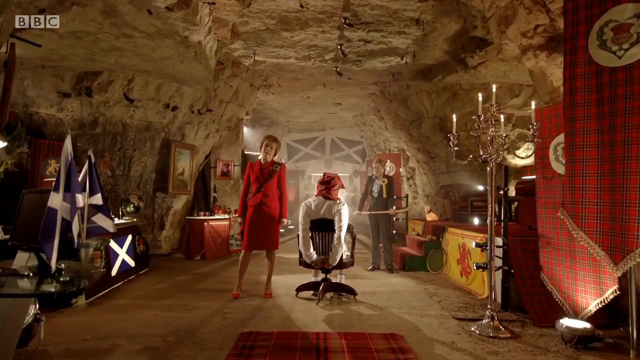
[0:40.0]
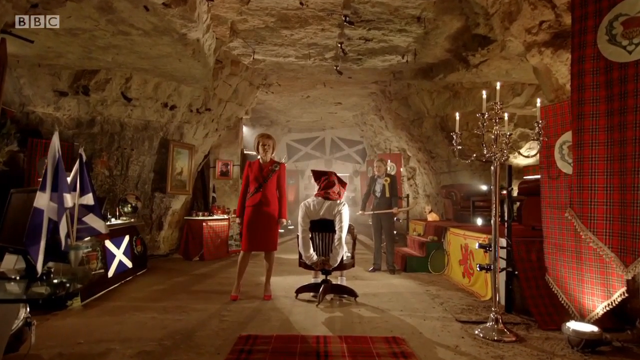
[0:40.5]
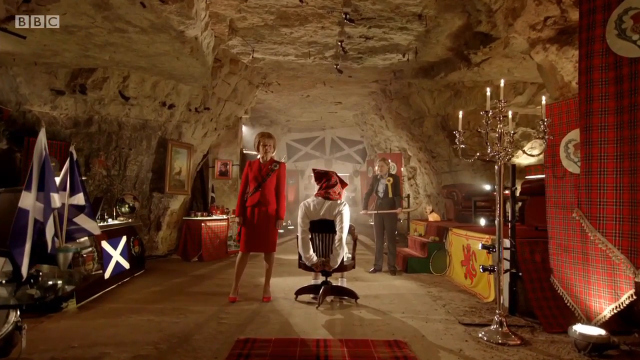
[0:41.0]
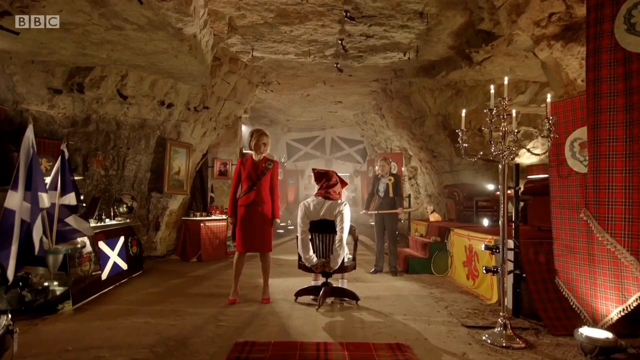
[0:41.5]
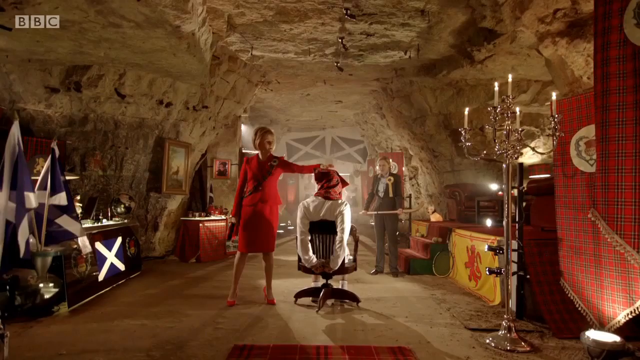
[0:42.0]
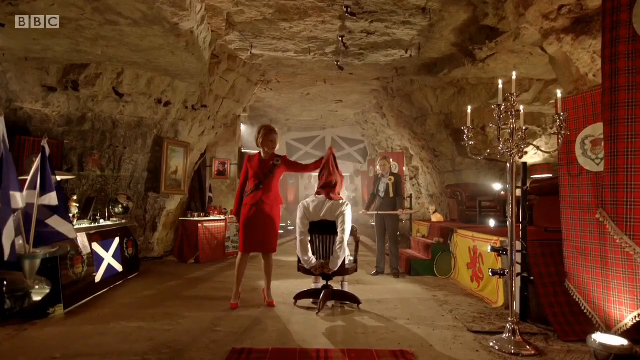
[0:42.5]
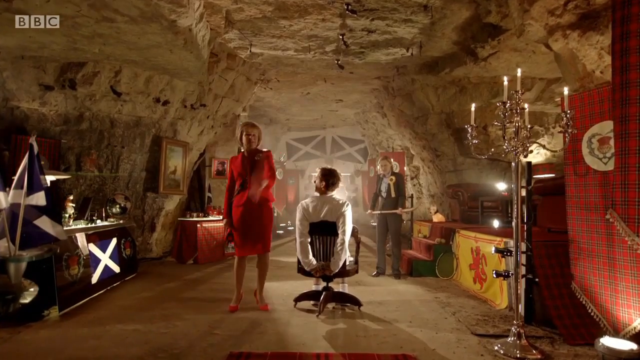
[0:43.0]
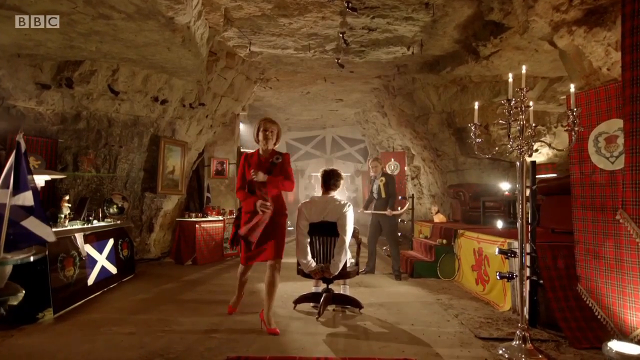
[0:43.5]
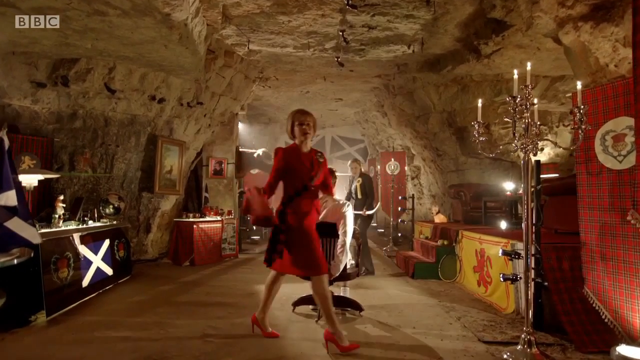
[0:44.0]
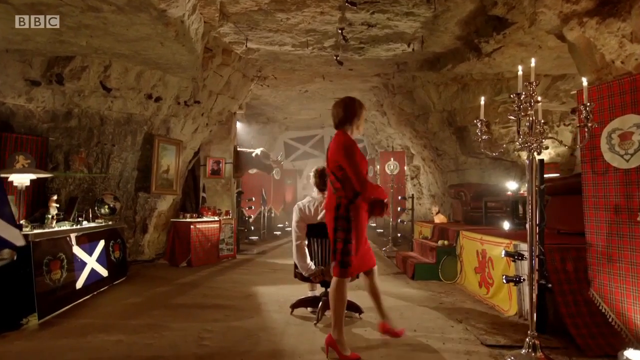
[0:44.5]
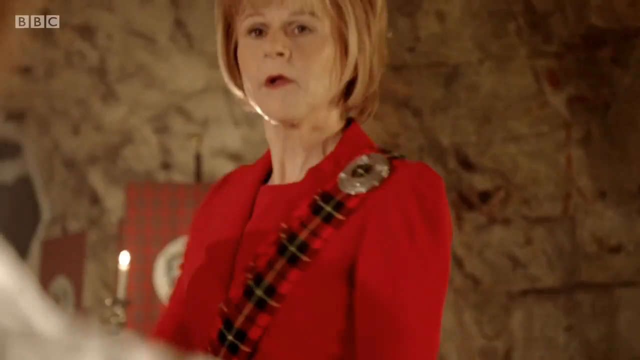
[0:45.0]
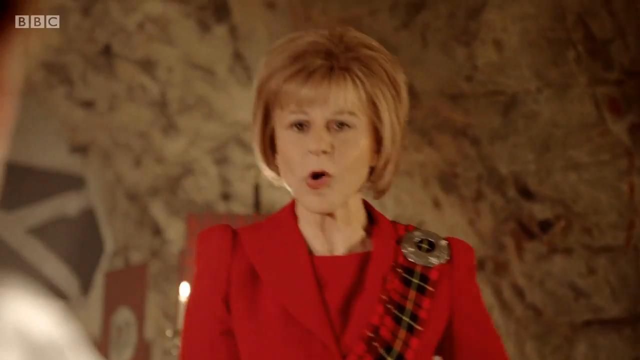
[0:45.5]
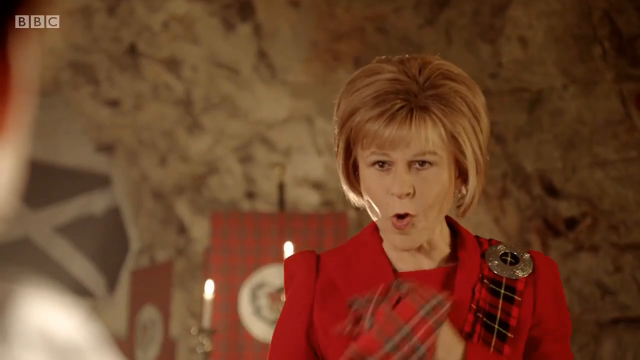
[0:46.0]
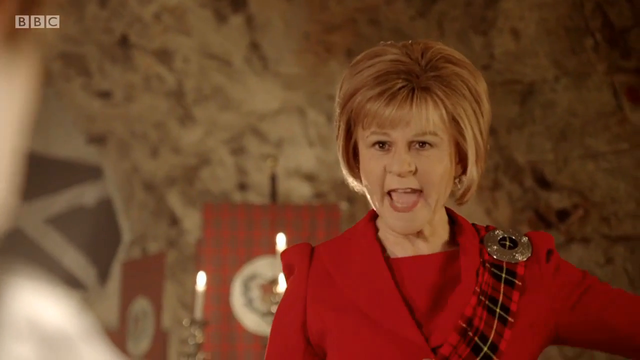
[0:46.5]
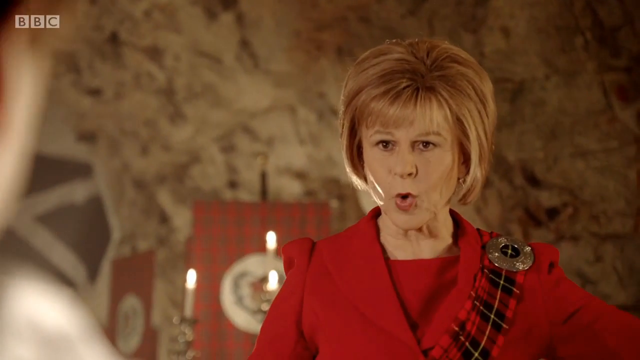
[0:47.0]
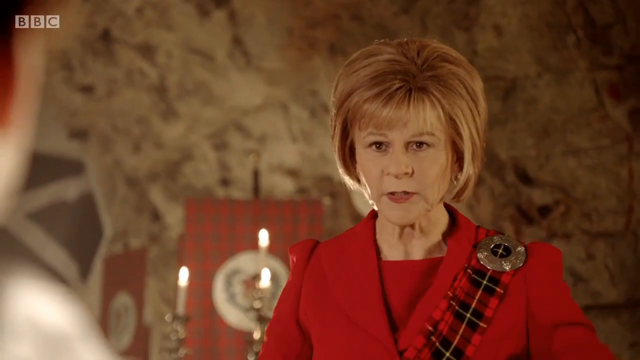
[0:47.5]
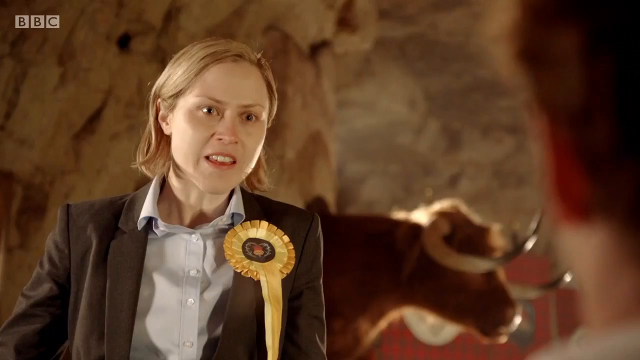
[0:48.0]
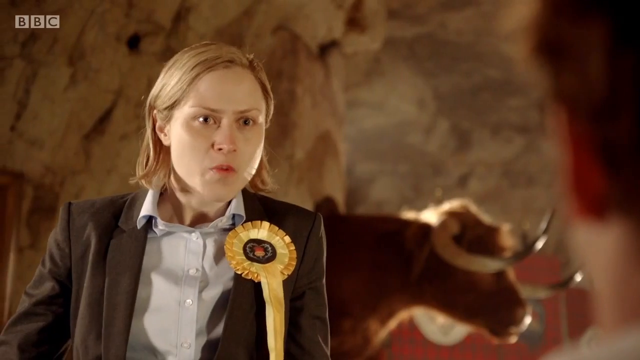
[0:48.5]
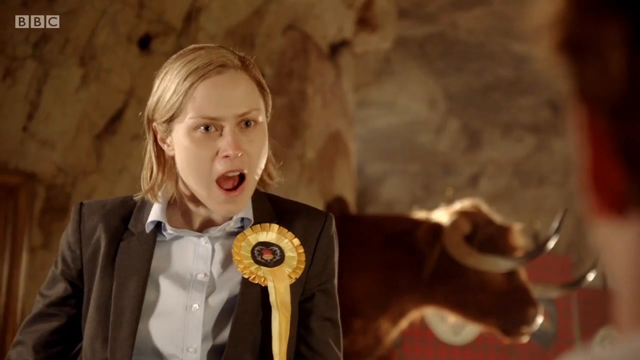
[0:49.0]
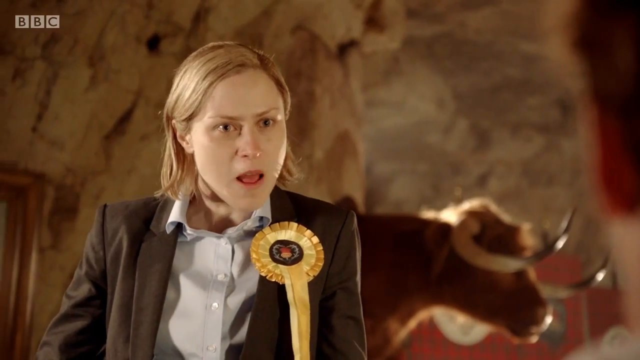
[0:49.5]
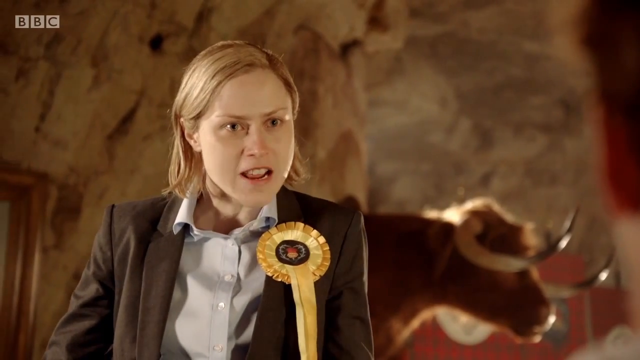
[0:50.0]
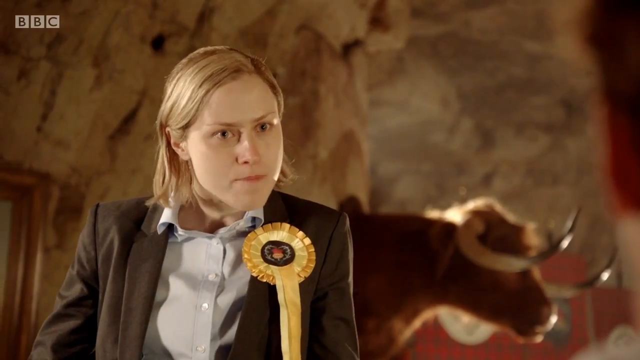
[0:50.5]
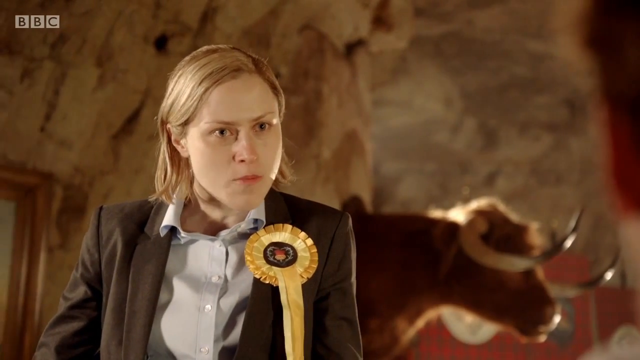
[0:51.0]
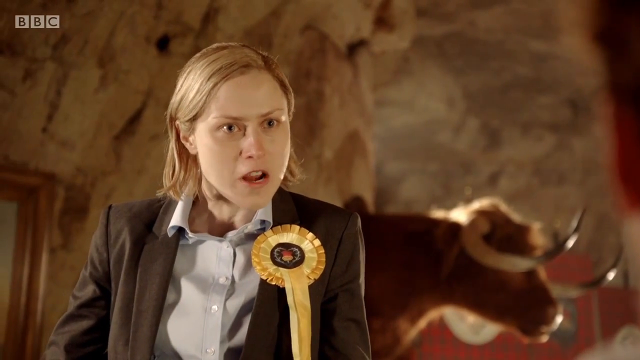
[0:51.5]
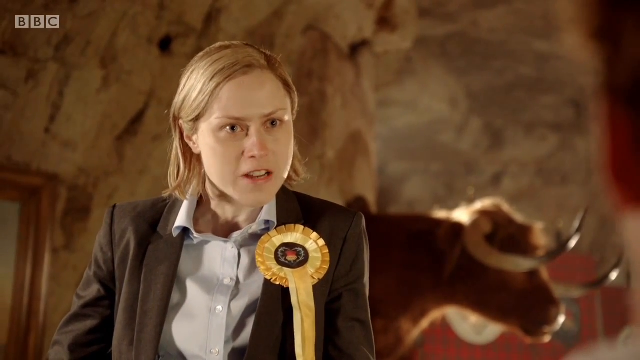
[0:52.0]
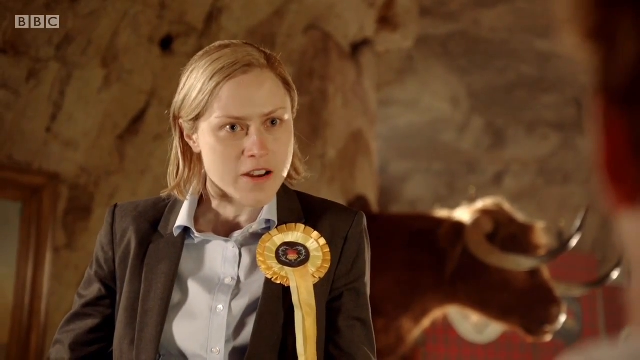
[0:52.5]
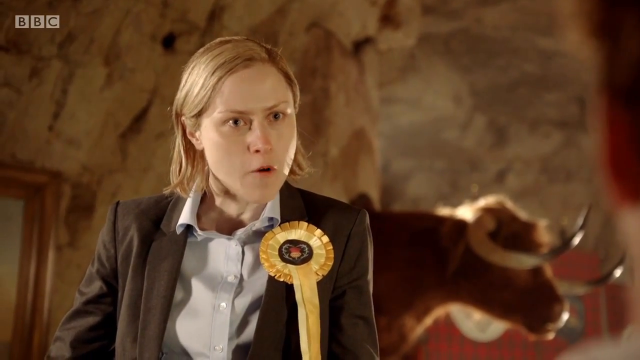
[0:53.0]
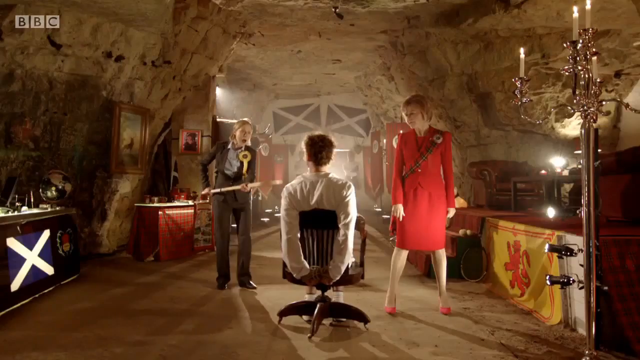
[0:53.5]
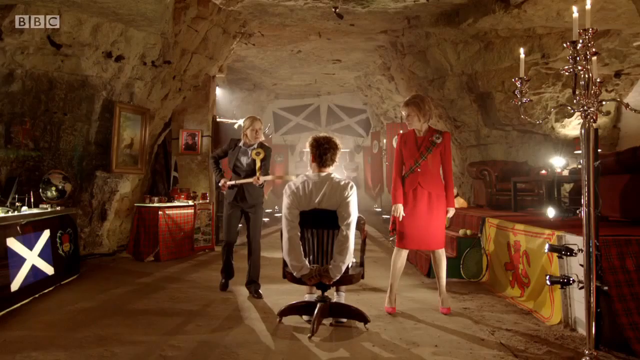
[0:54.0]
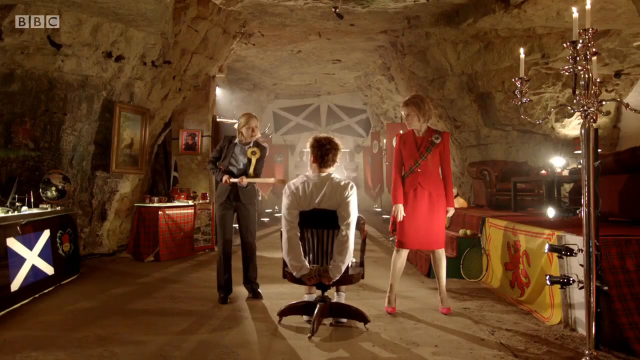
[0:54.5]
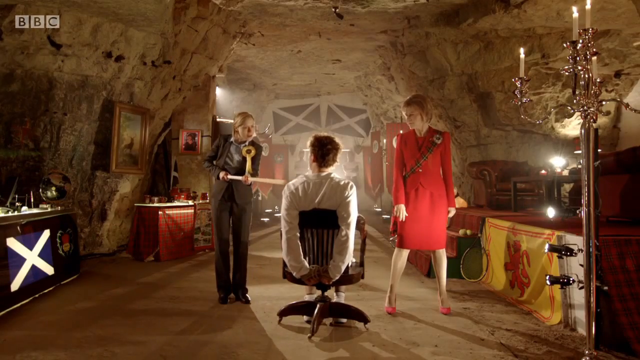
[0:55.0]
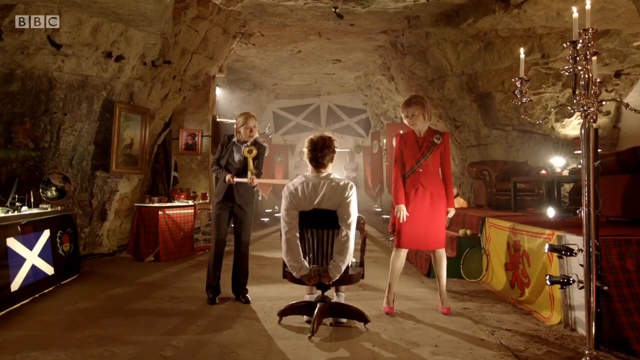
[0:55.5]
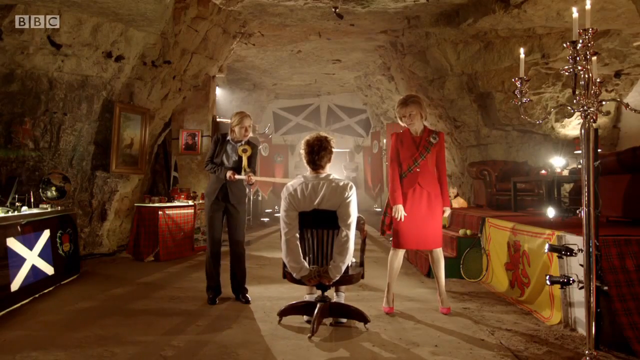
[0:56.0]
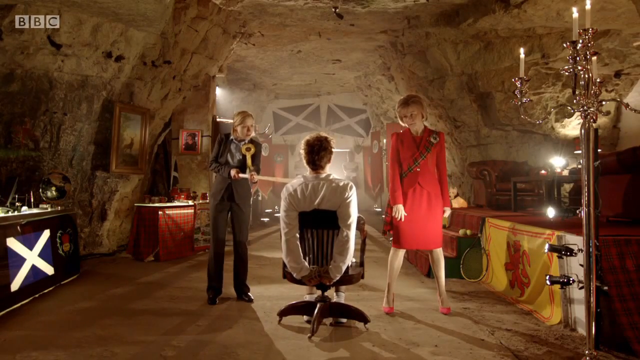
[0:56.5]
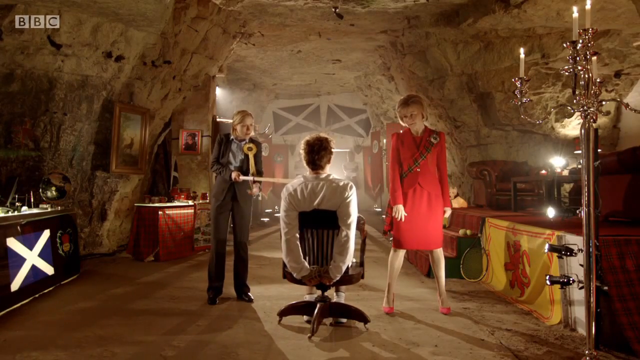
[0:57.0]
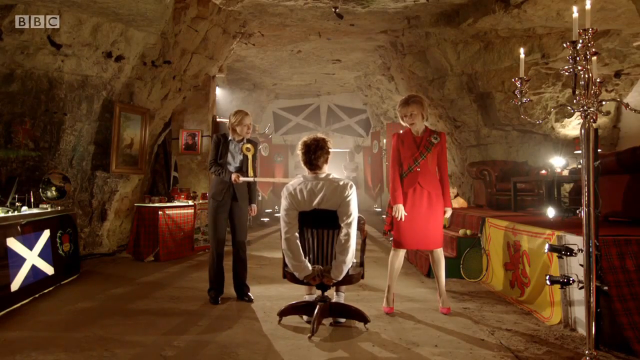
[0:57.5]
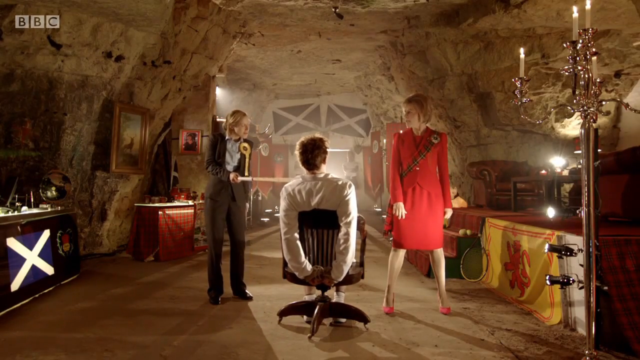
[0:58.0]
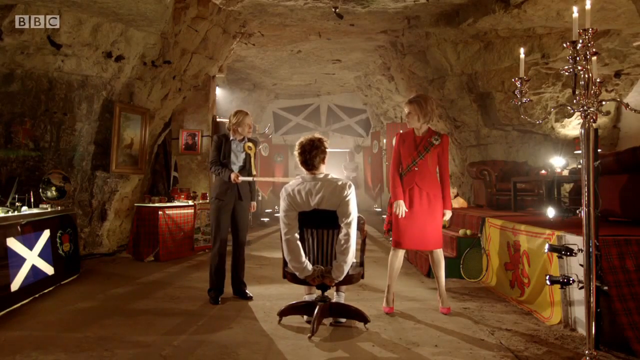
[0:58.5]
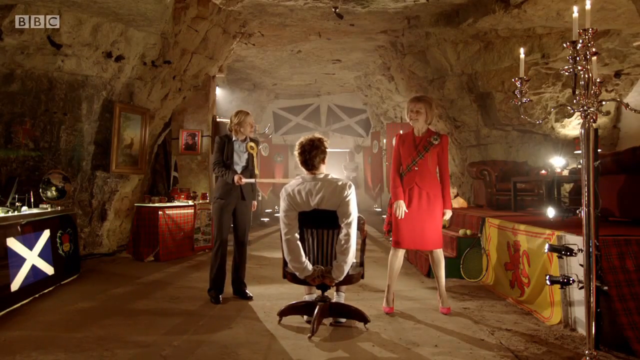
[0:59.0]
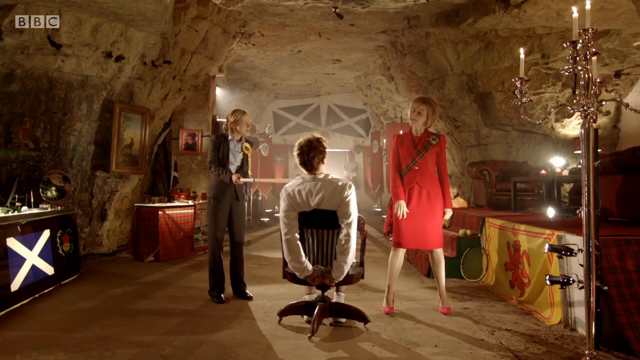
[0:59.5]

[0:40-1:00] Three people, two women and a man, are in the center of the shot as the camera approaches them very slowly. The man, in a white shirt, is exactly in the center. Next to him is a woman wearing a red jacket, a red skirt and red shoes. She stretches her left arm to the man's head and removes the hood covering his face. She then walks around the chair the man sits on, while in the background the other woman, who wears a dark jacket and holds a wooden stick, moves slightly to the left and ends up behind the man. In the next shot, the camera follows the woman in red as she speaks to the man, and then the other woman, who has a yellow bow on her jacket, speaks to the man while pointing the wooden stick at him.